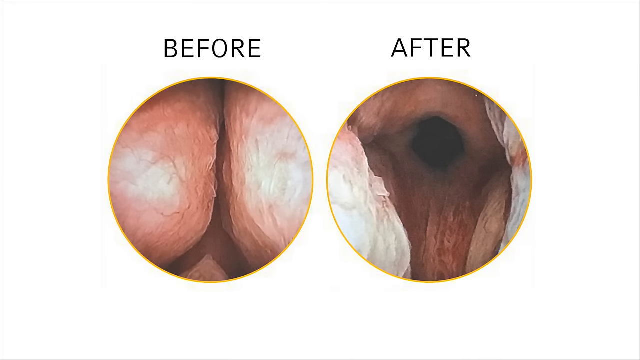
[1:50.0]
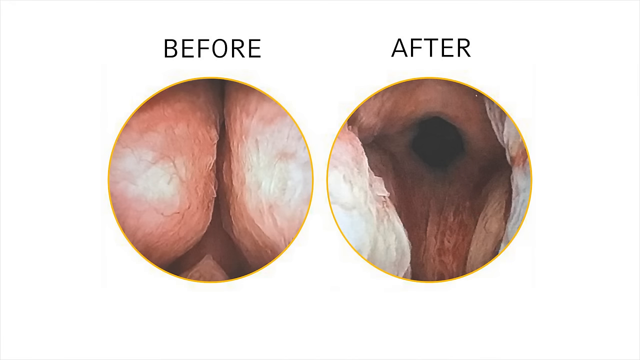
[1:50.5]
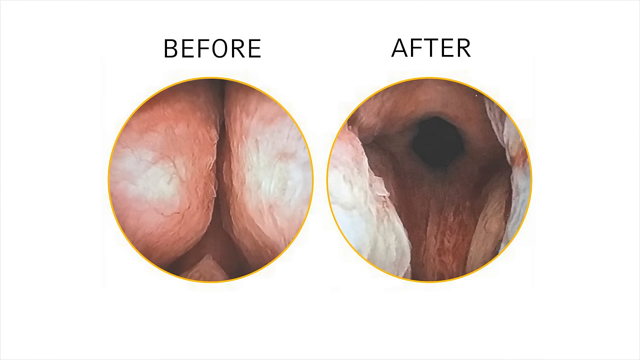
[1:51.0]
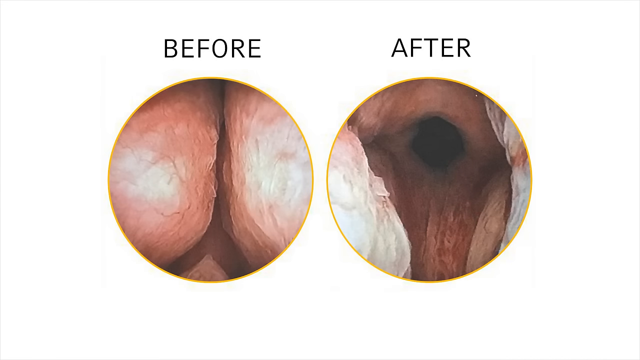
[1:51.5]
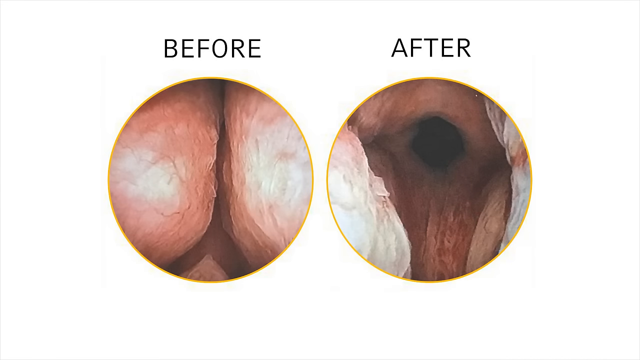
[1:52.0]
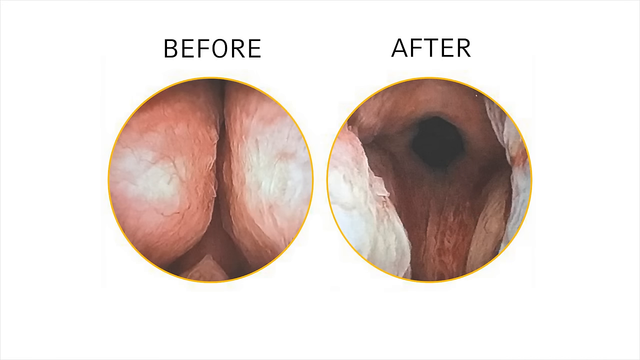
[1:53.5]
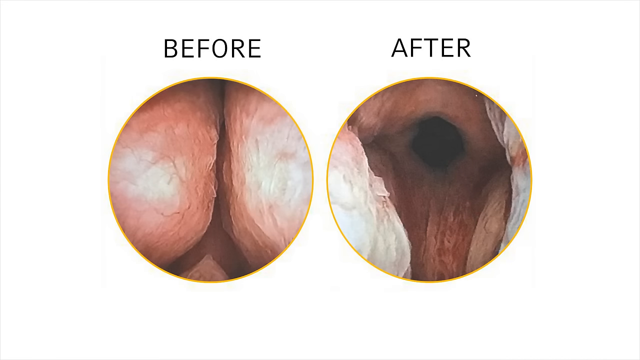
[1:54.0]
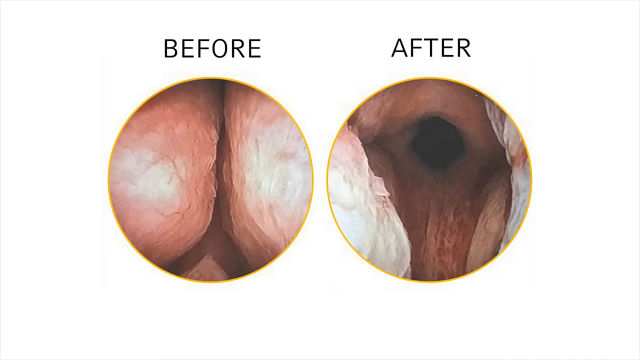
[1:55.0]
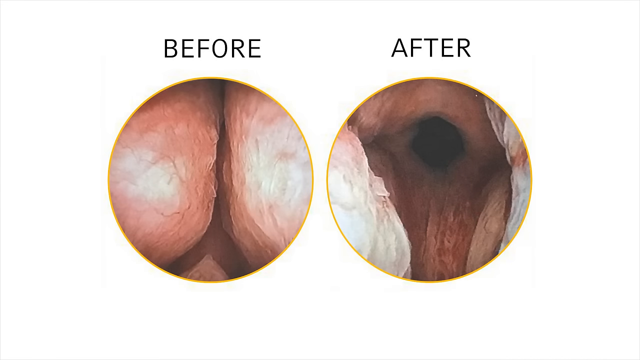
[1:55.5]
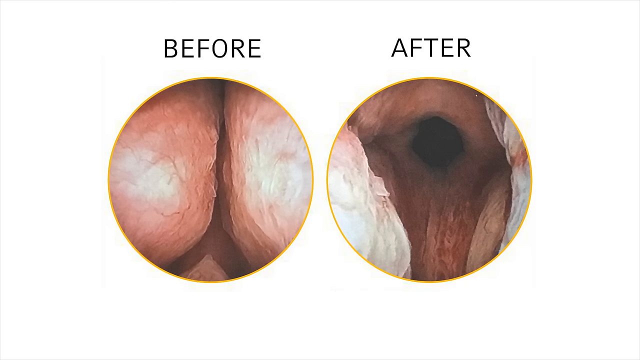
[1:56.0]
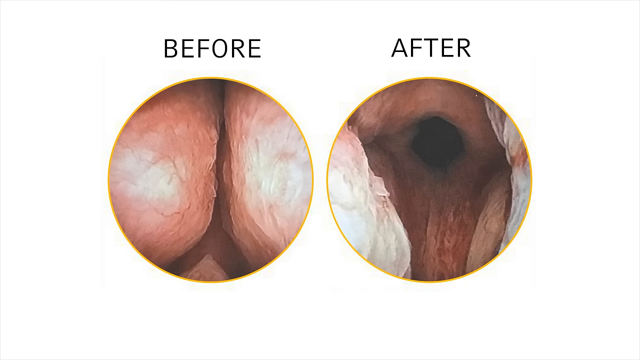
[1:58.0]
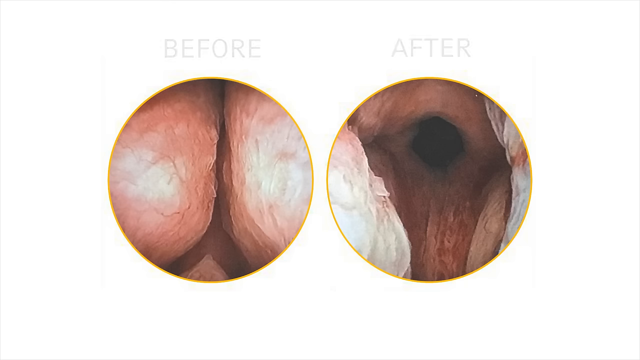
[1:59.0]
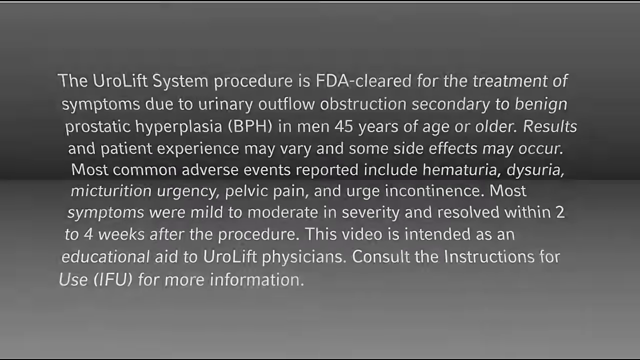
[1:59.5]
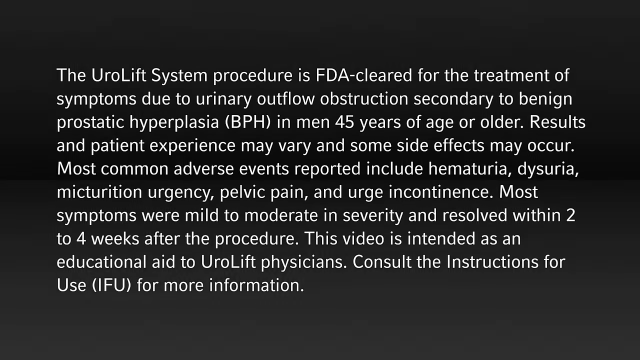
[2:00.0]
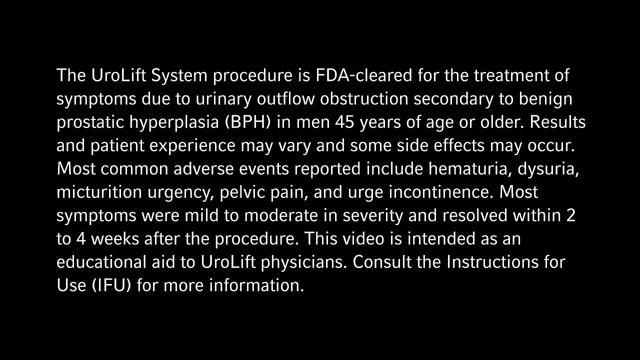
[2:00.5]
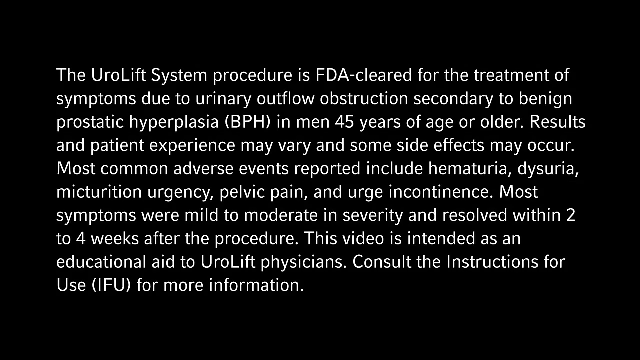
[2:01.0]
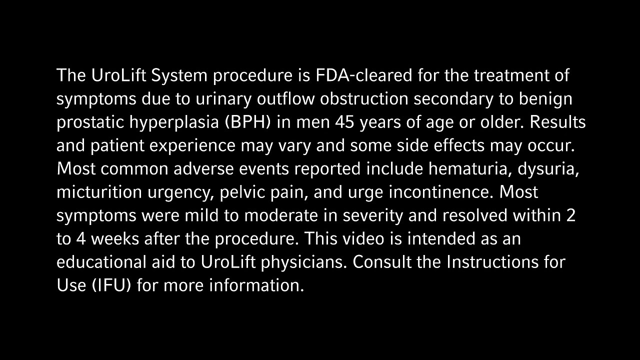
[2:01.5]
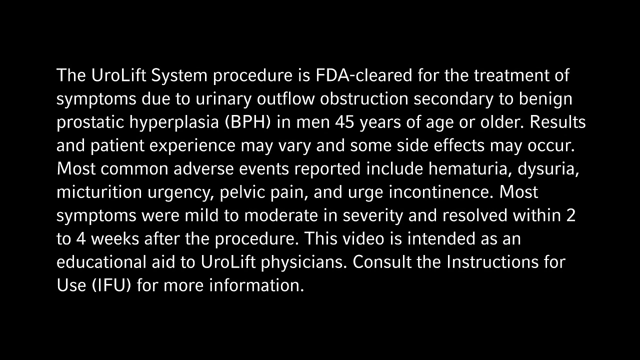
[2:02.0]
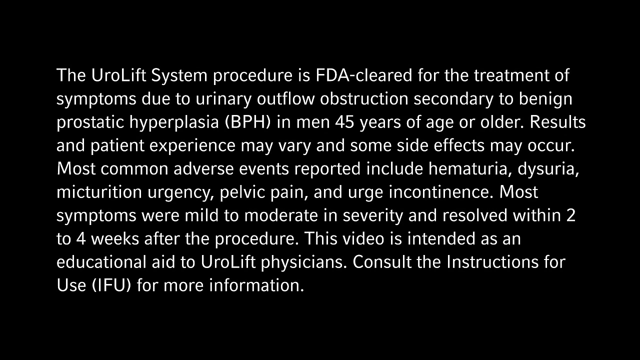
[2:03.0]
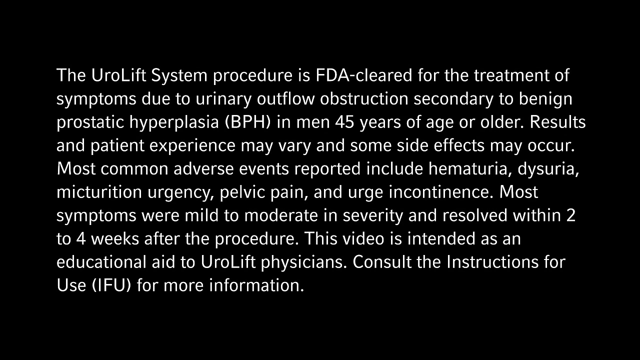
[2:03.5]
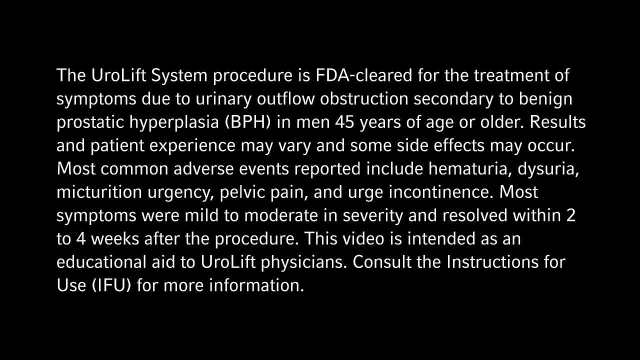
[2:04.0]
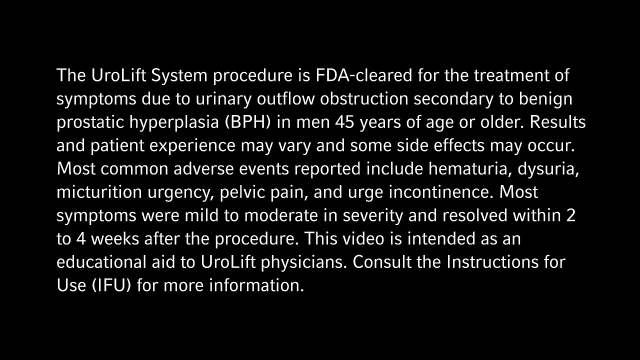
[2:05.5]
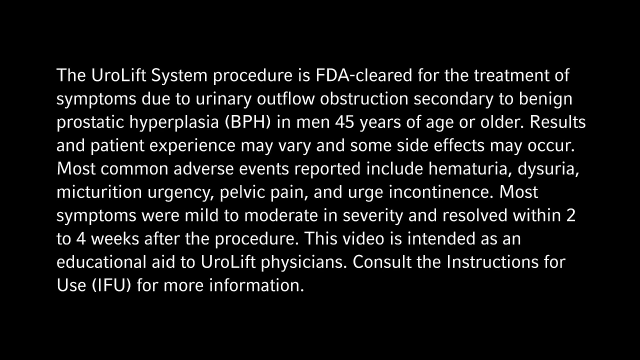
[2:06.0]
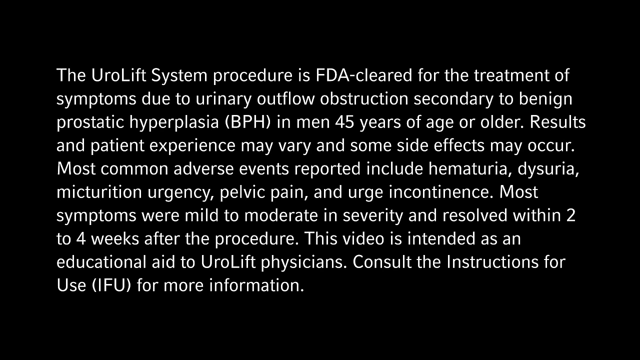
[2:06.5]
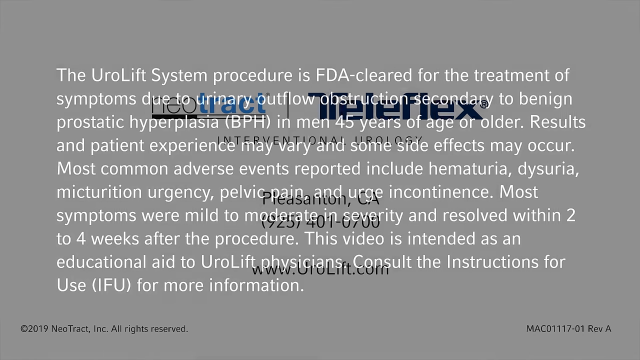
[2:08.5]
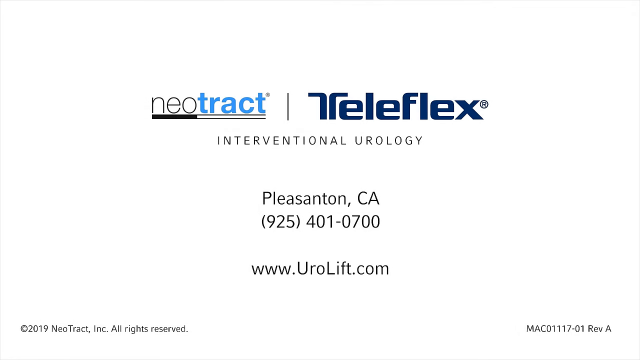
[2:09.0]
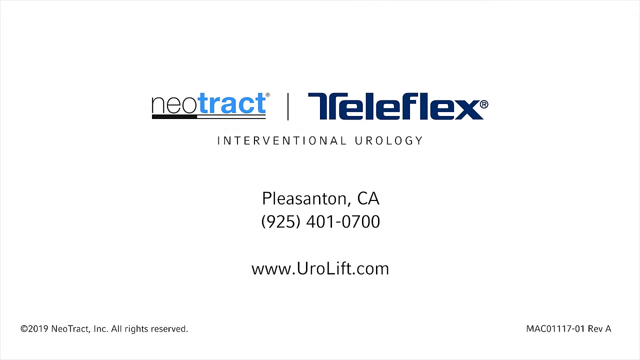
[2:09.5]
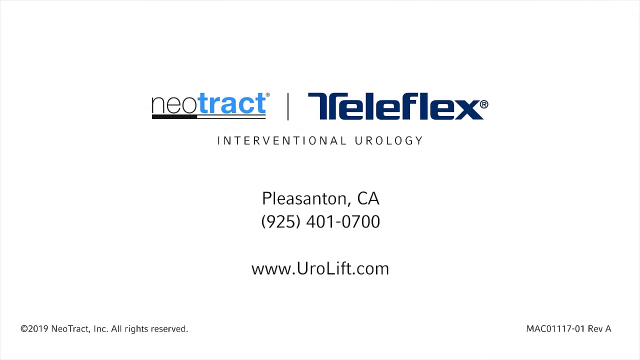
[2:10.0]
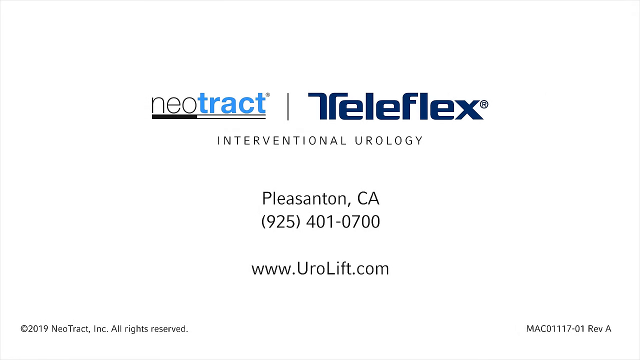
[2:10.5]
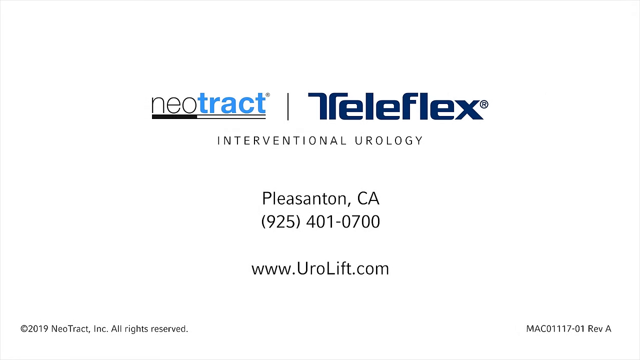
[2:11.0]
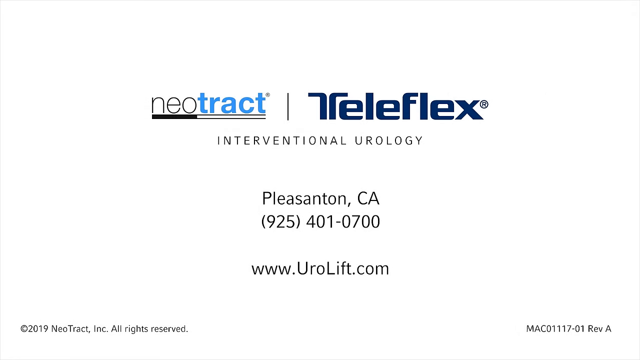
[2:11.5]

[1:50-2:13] Two images in circular frames are displayed side by side against a pale off-white background. The left image is labeled before and the right image is labeled after. The left image shows what looks like a human prostate gland with a very low opening between the bladder and the urethra, while the after image shows the opening widened. The screen then transitions to a paragraph of white text on a black background that reads: "the Urolift system procedure is FDA cleared for the treatment of symptoms due to urinary outflow obstruction, secondary to benign prostatic hyperplasia, BPH in men 45 years of age or older. Results and patient experience may vary and some side effects may occur. Most common adverse events reported include hematuria, dysuria, micturition urgency, pelvic pain, and urge incontinence. Most symptoms were mild to moderate in severity and resolved within two to four weeks after the procedure. The video is intended as an educational aid to Urolift physicians. Consult the instructions for use IFU for more information." The text stays on the screen.